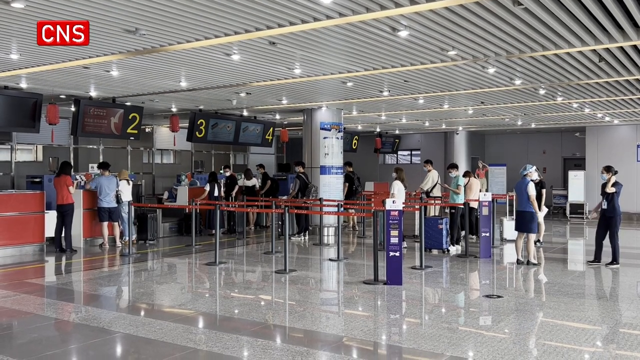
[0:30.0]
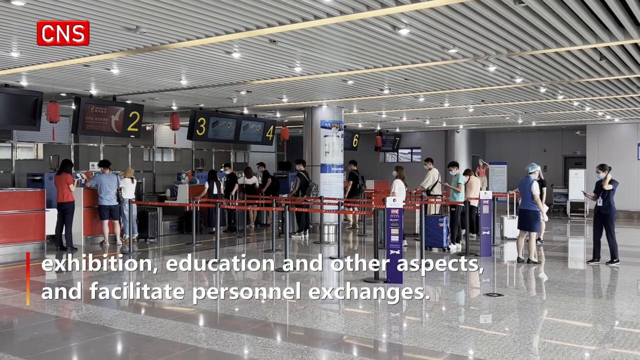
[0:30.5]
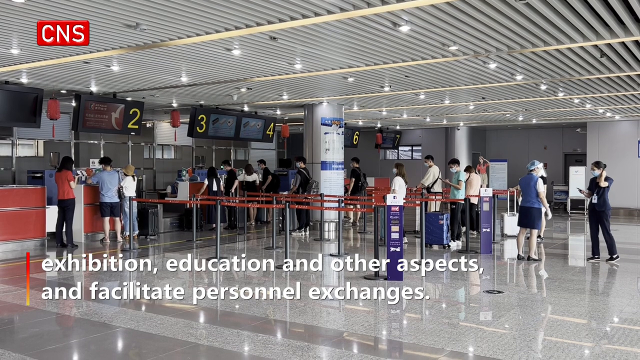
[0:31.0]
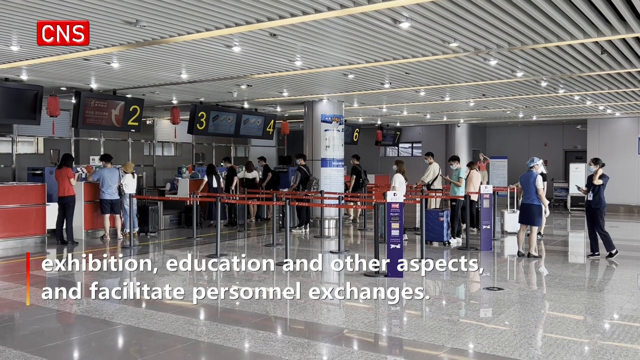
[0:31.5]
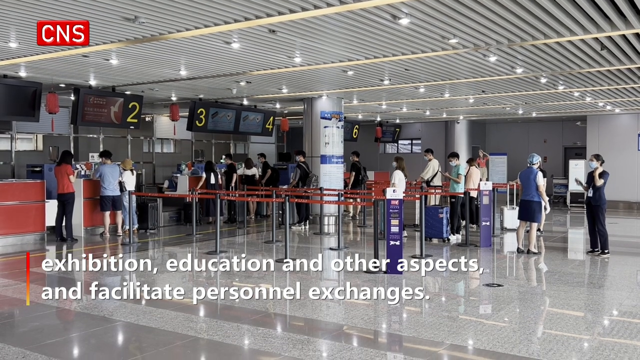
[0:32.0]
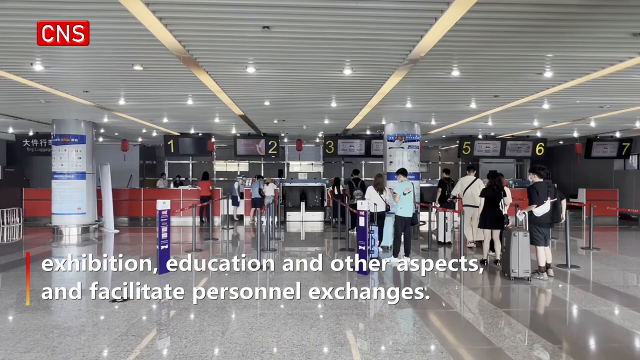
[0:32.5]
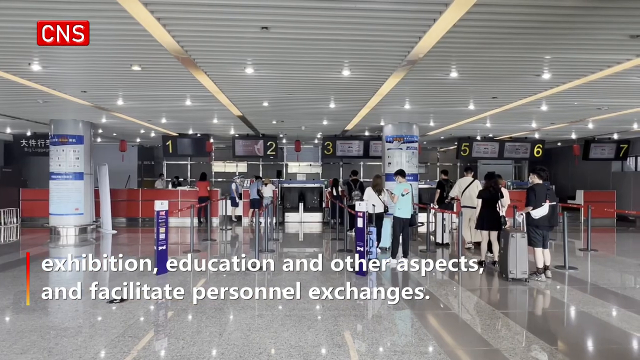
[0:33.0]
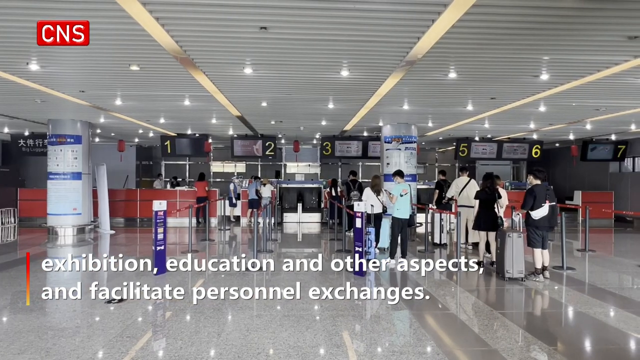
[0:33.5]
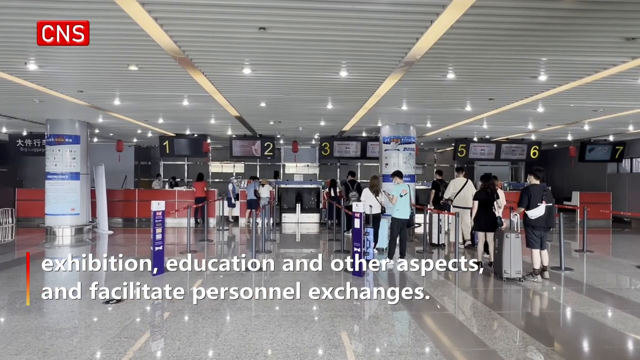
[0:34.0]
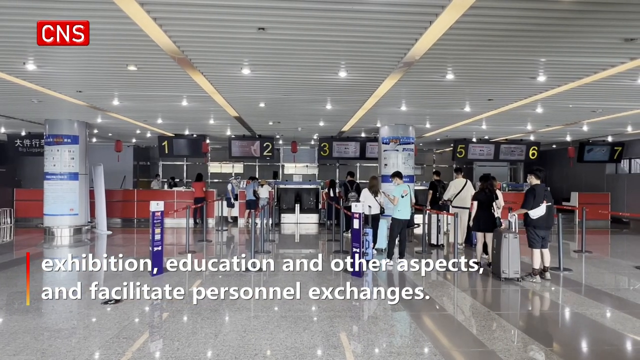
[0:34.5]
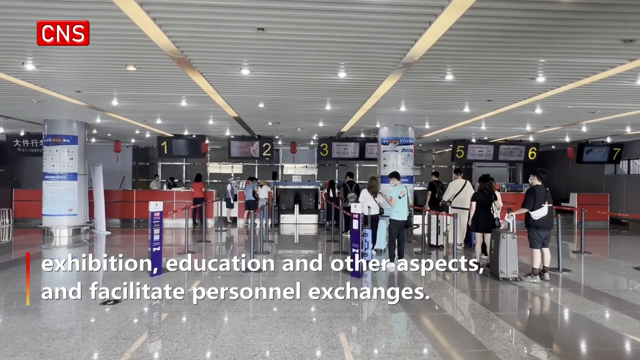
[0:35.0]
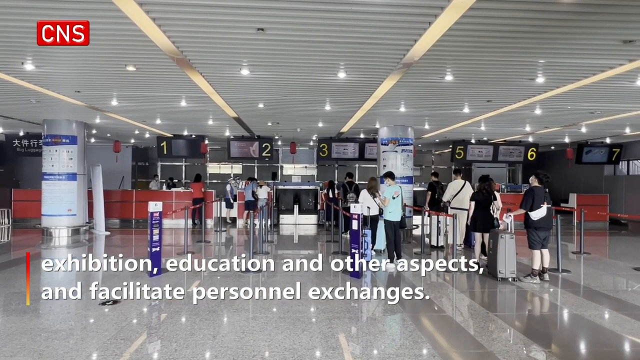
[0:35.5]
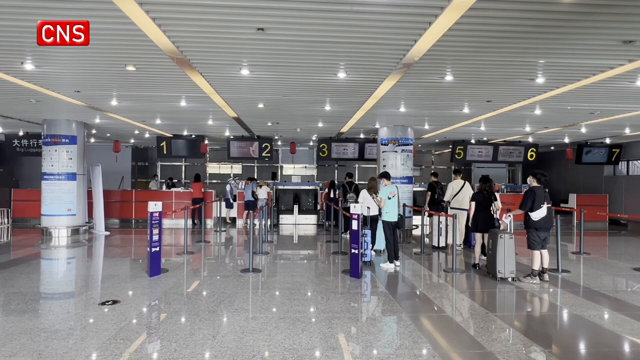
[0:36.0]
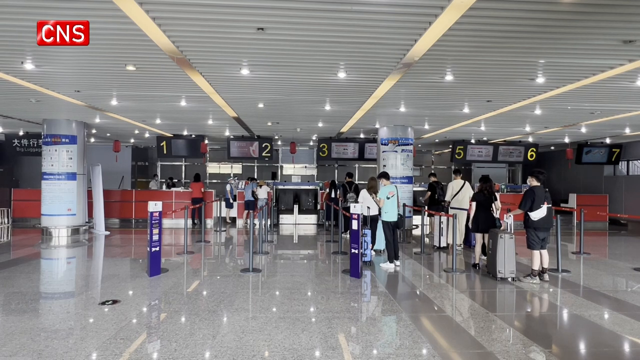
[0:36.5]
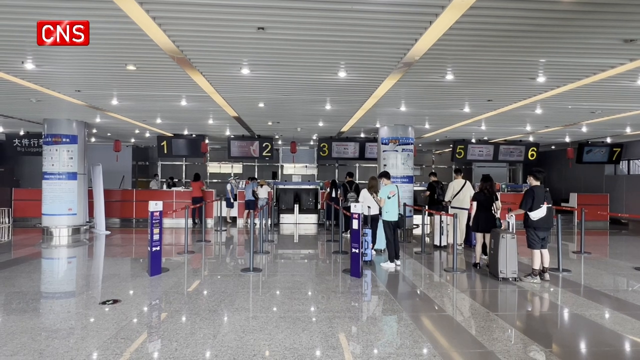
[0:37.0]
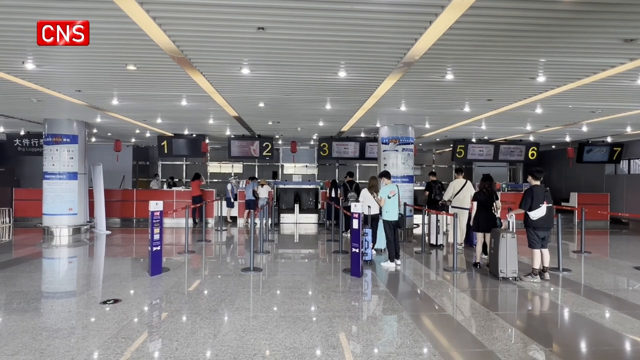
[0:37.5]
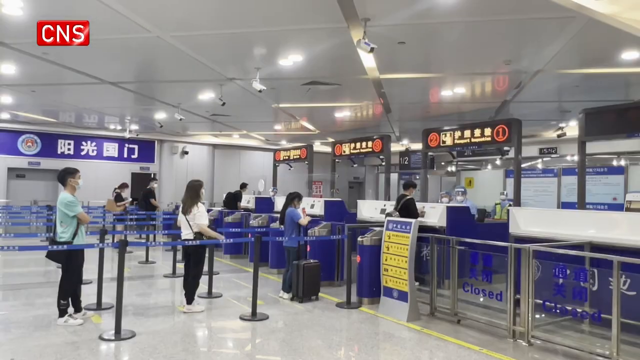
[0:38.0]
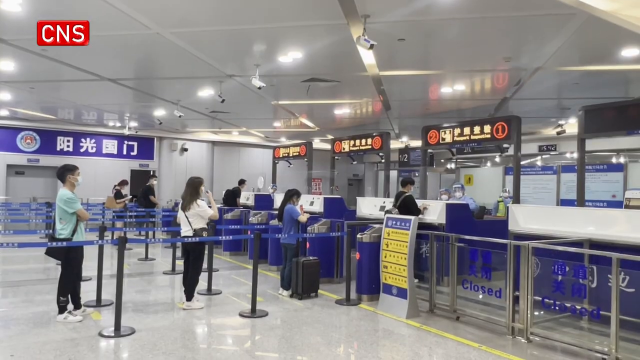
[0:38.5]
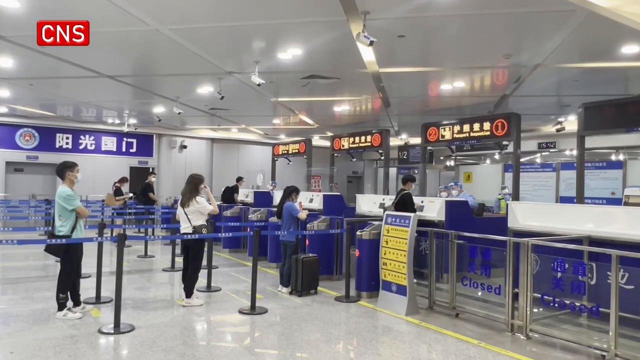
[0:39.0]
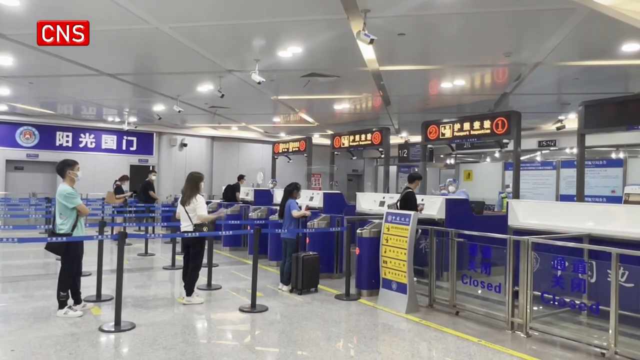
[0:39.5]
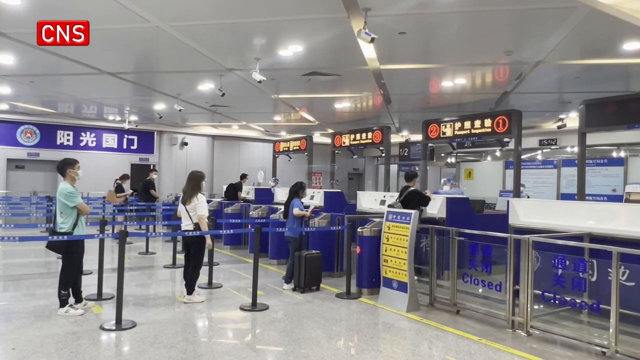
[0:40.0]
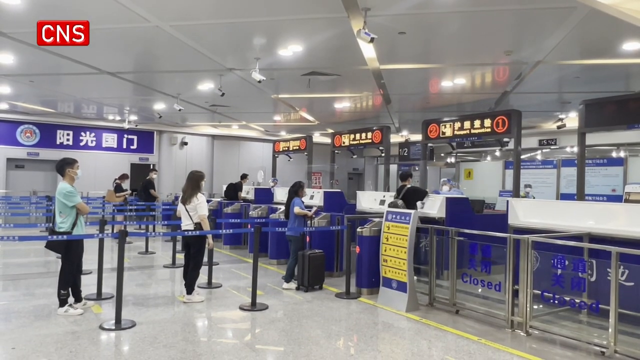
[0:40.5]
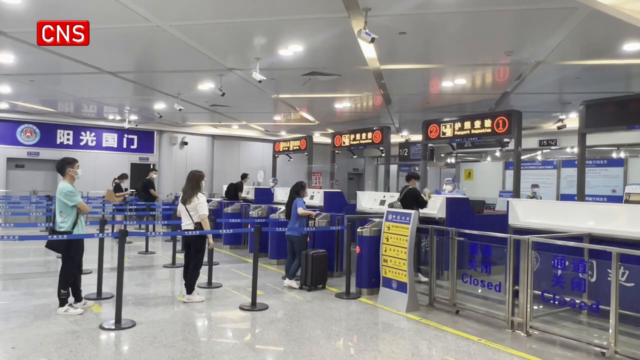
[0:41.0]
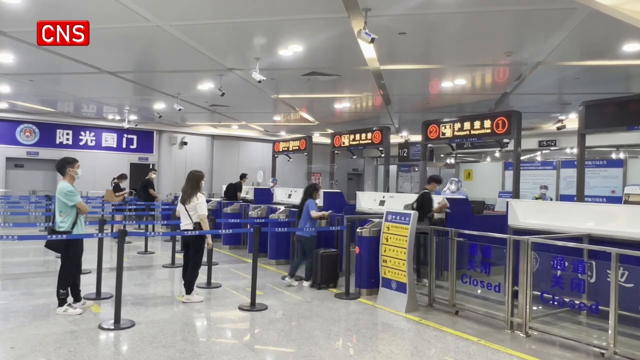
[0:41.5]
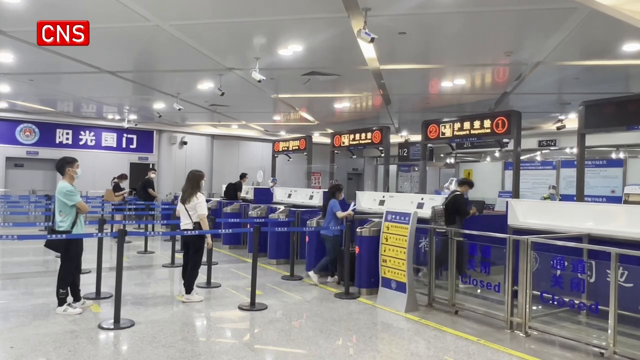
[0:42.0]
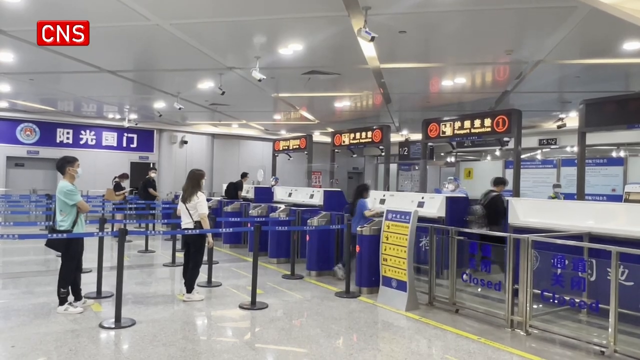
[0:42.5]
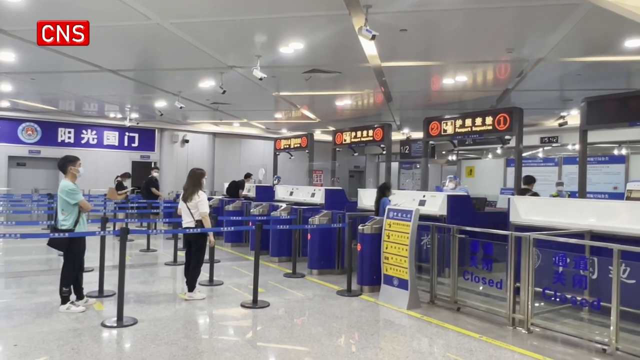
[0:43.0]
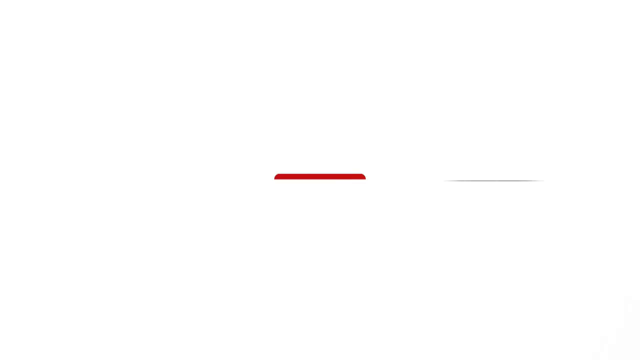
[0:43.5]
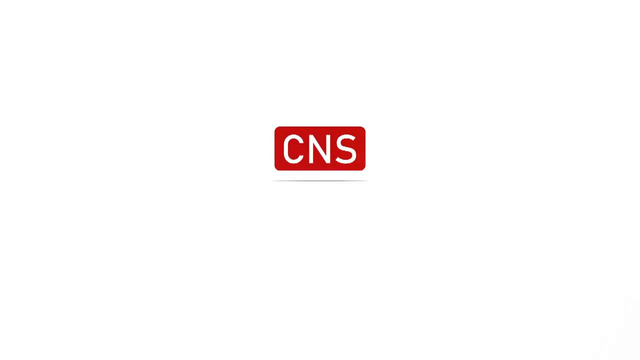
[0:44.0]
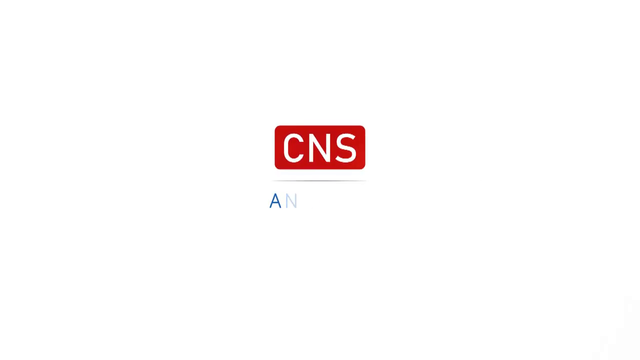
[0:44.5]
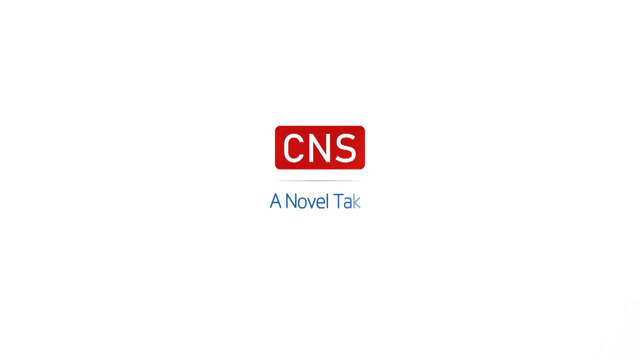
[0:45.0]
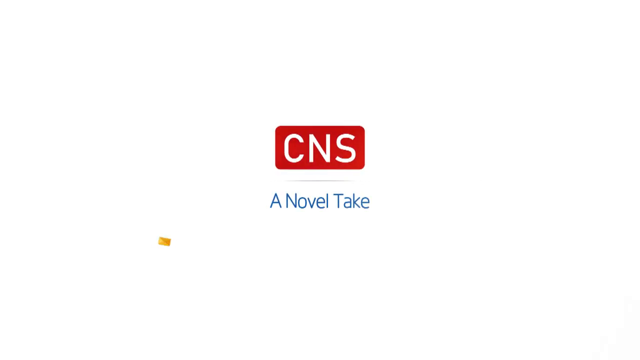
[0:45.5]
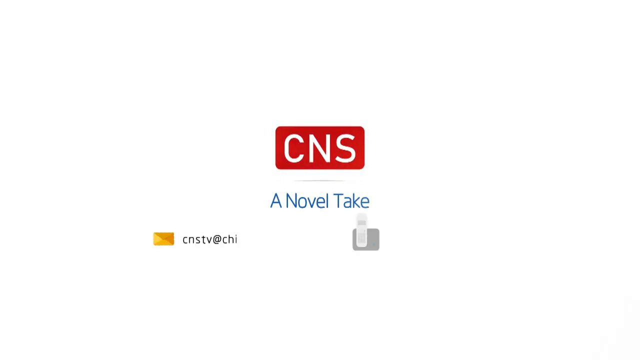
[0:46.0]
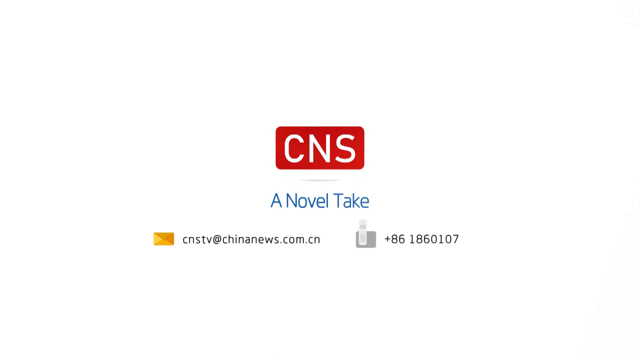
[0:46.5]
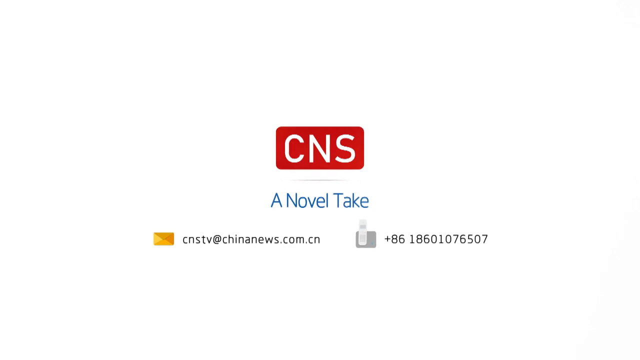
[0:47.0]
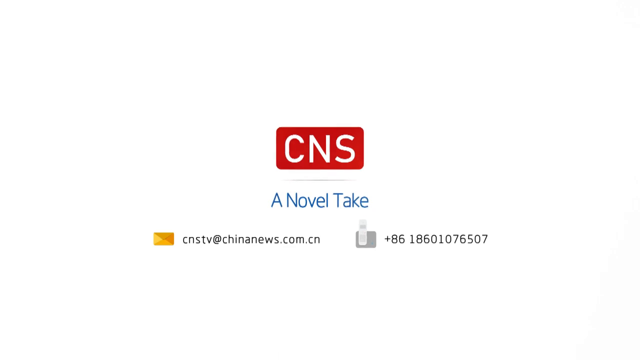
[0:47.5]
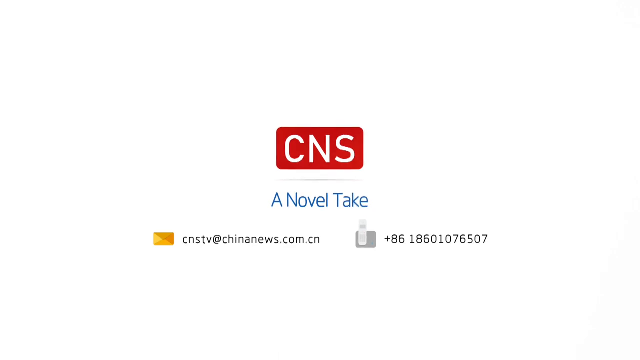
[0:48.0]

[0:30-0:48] At the airport in China's Zhejiang province, on-screen text reads "exhibition education and other aspects and facilitate personnel exchanges." The video then cuts to what looks like the beginning of the security line. The gates are blue, and there is not much of a line: four people are in one line and three people are further back in another. Everyone is wearing a mask. The words on all the signs are in Chinese, though some of the gates say "closed" in English. One person is rolling up with a suitcase, while others just have handbags with them. The ceiling and the floor are white. The man in the line on the farthest left wears black pants and an aqua t-shirt and has short dark hair. A woman in the middle line wears a white t-shirt and black pants and has long dark hair.